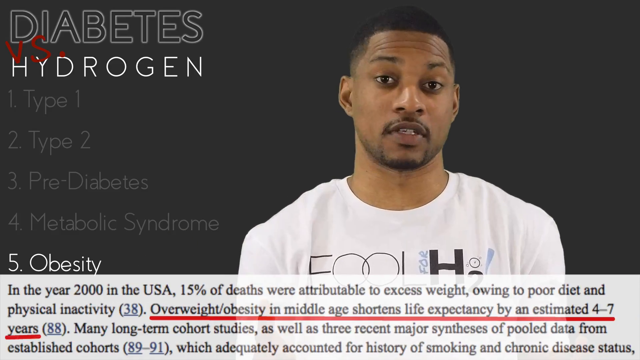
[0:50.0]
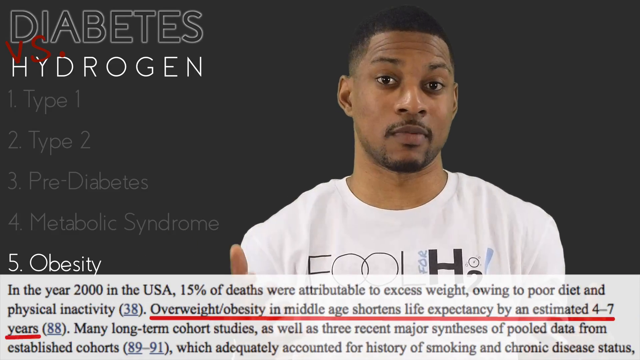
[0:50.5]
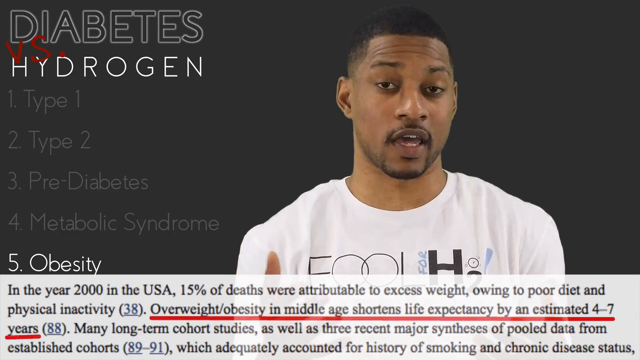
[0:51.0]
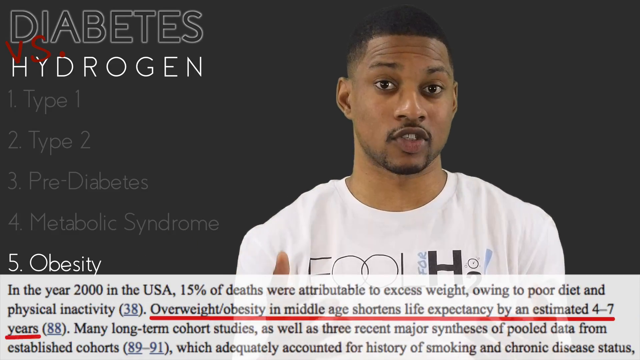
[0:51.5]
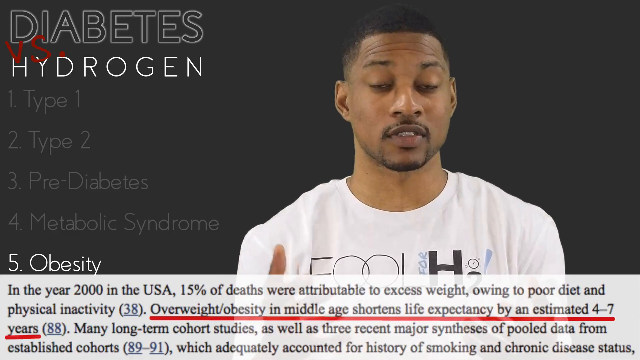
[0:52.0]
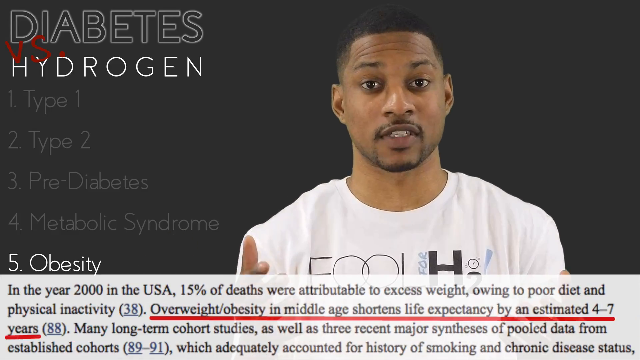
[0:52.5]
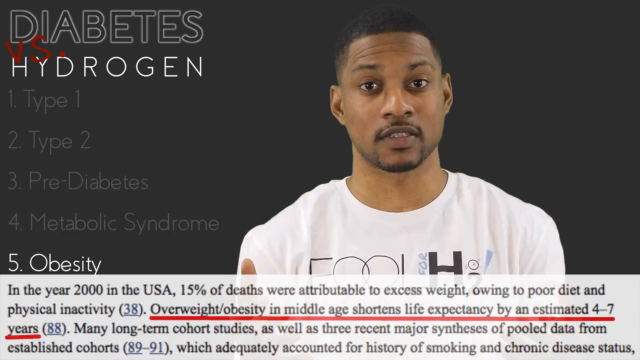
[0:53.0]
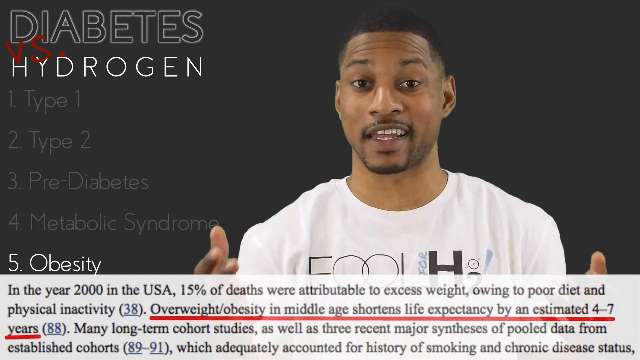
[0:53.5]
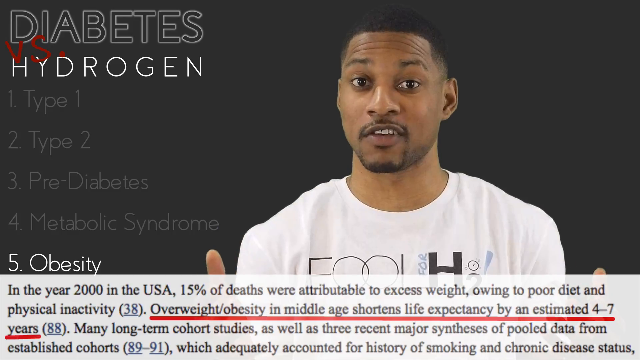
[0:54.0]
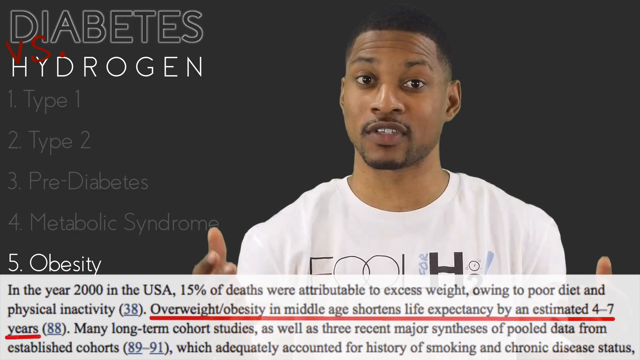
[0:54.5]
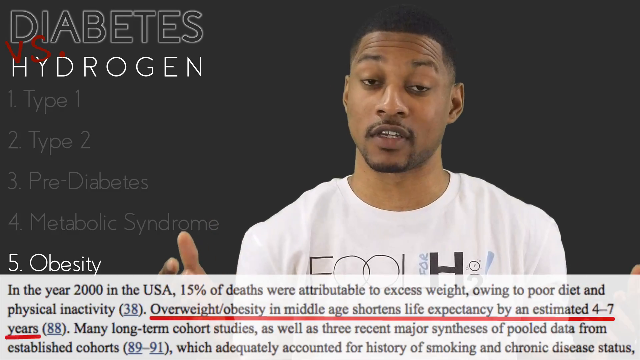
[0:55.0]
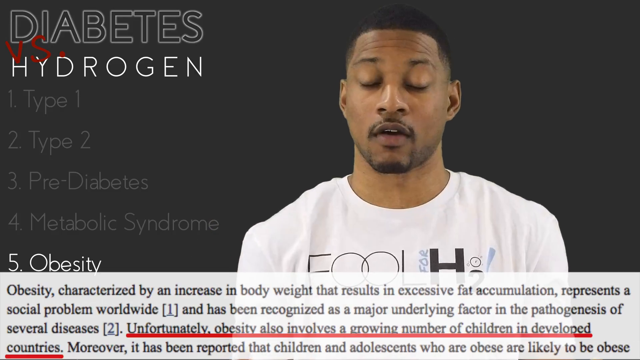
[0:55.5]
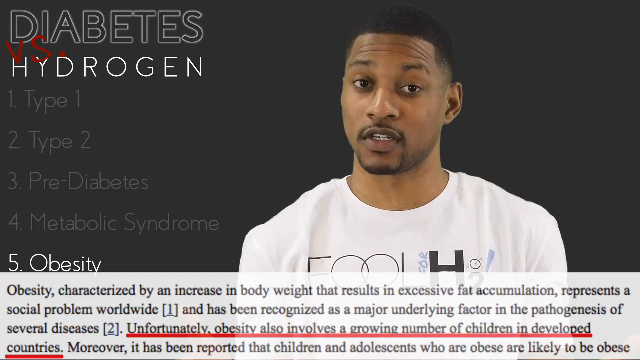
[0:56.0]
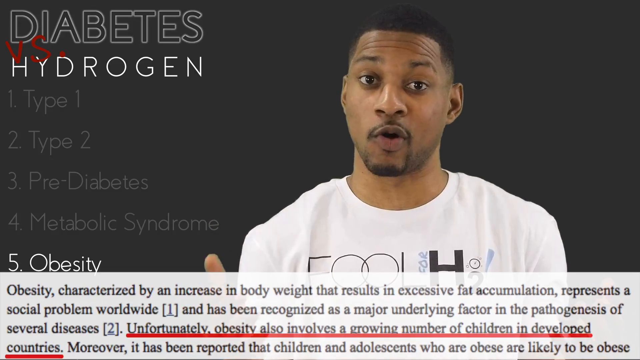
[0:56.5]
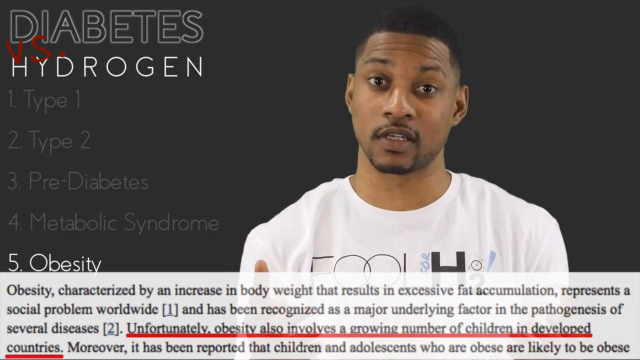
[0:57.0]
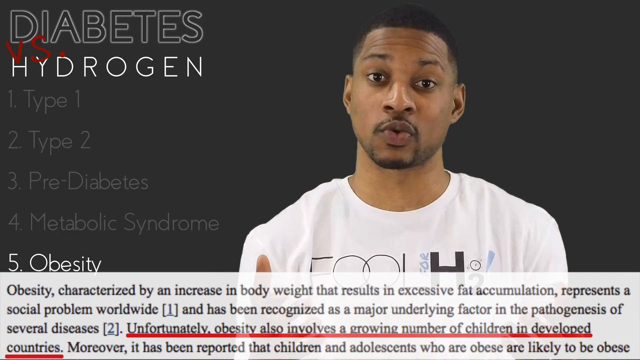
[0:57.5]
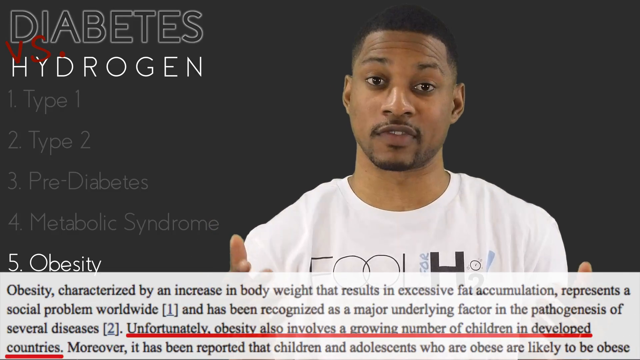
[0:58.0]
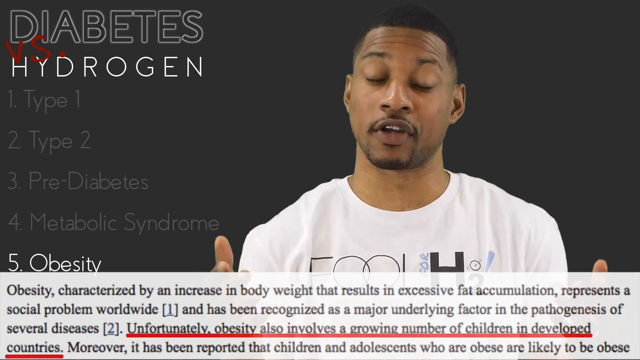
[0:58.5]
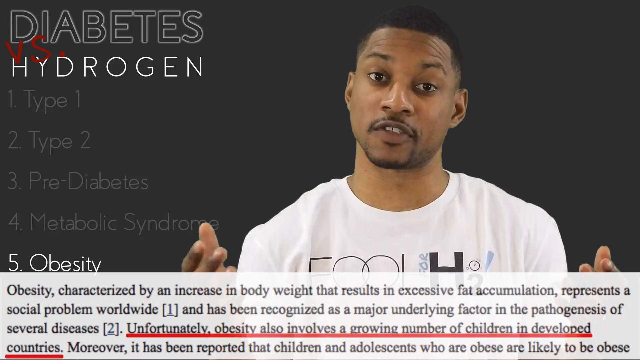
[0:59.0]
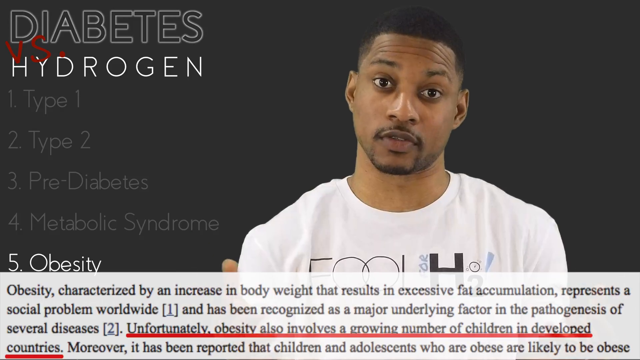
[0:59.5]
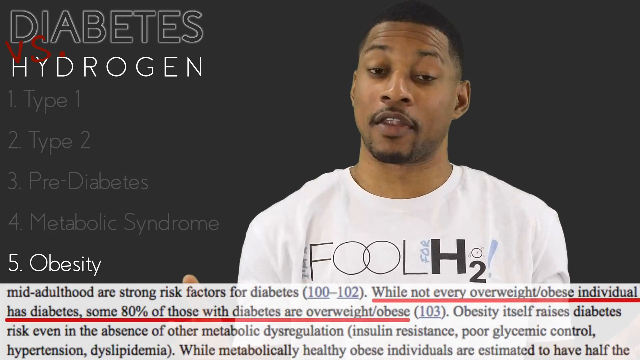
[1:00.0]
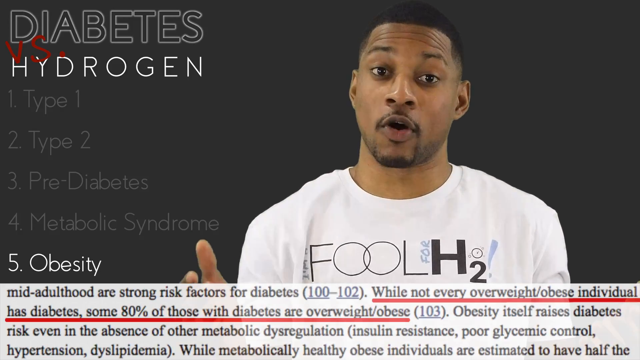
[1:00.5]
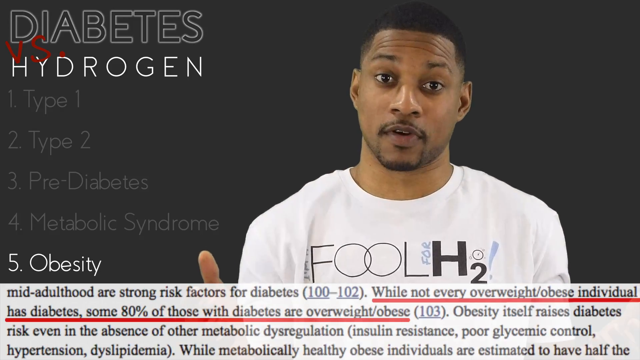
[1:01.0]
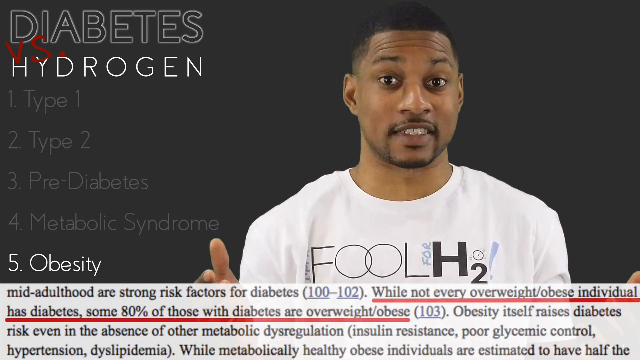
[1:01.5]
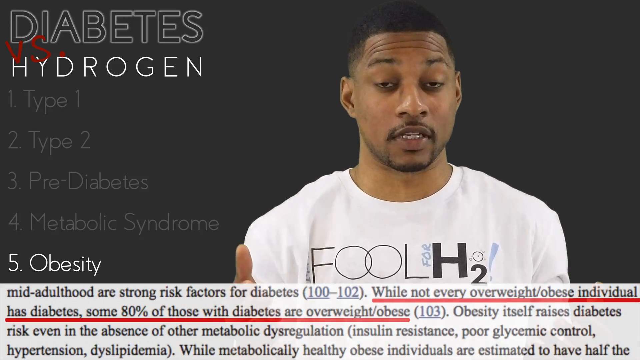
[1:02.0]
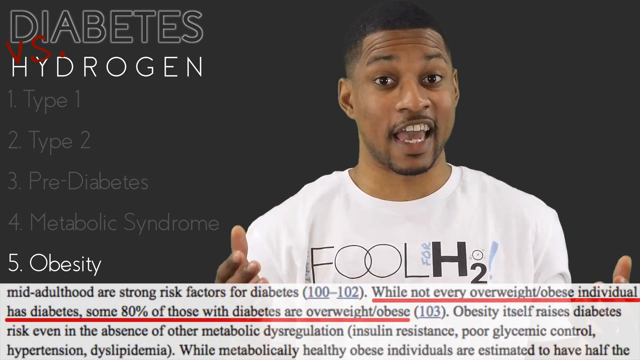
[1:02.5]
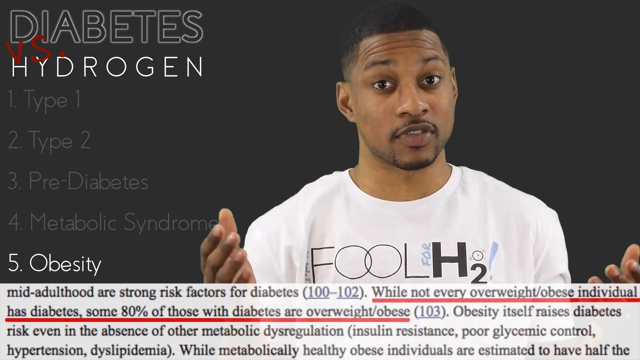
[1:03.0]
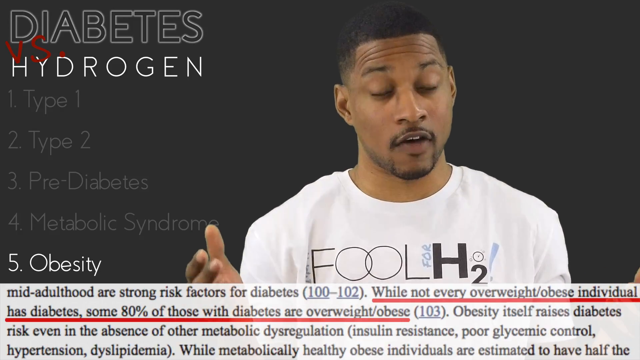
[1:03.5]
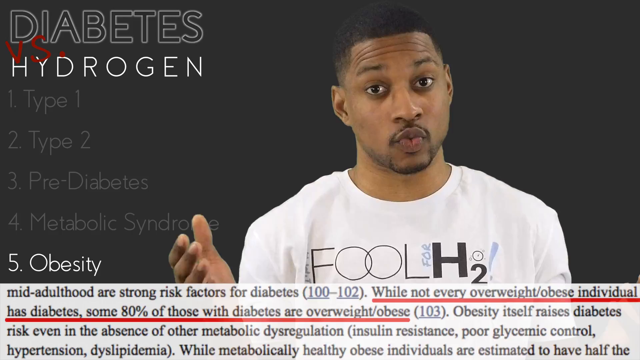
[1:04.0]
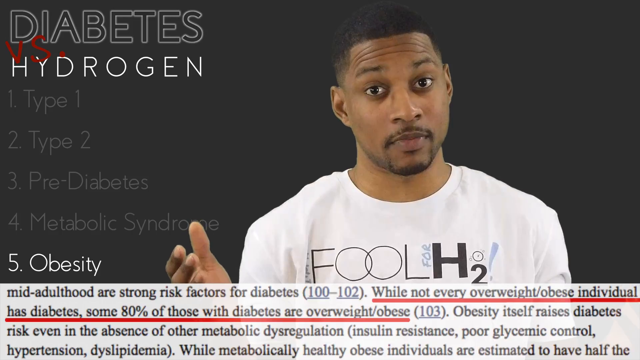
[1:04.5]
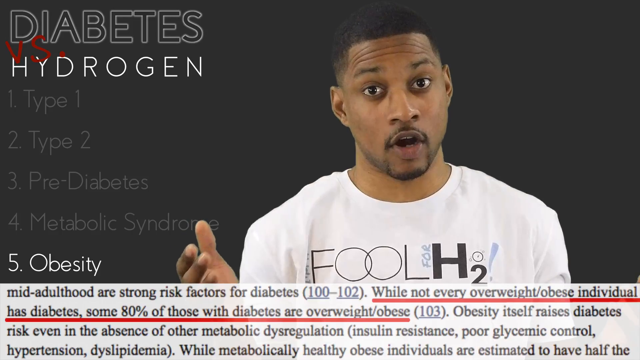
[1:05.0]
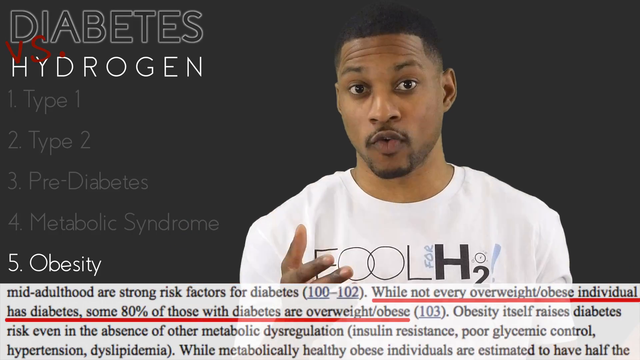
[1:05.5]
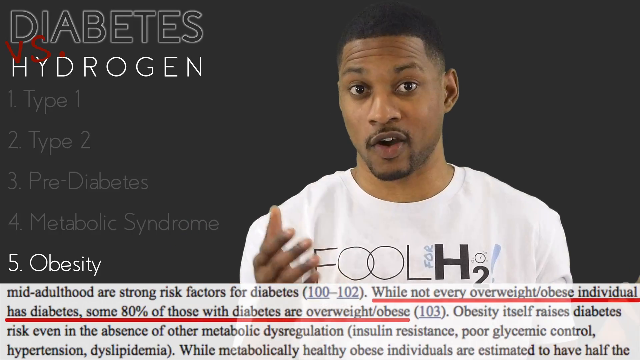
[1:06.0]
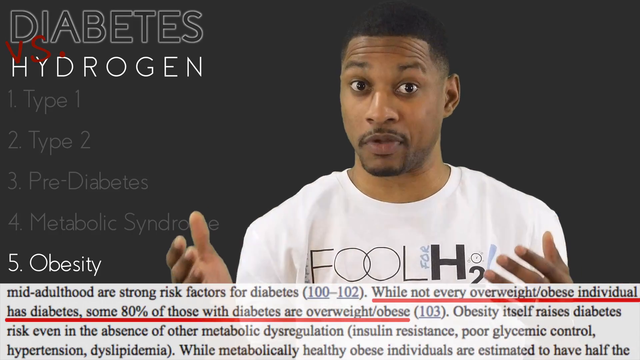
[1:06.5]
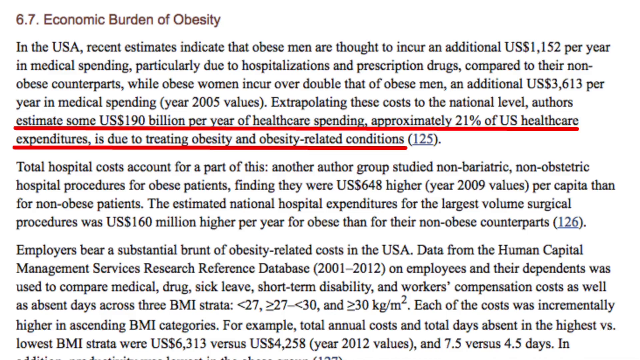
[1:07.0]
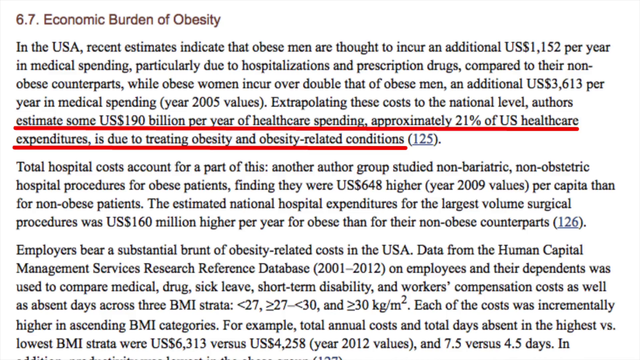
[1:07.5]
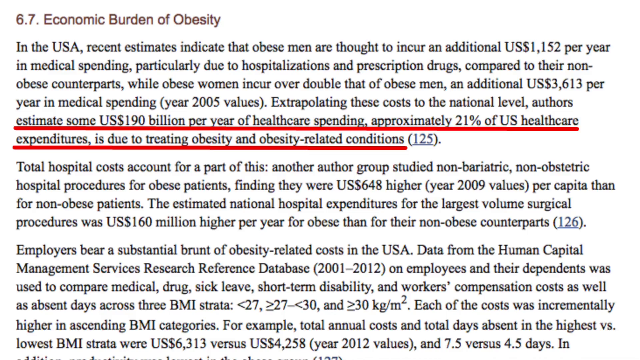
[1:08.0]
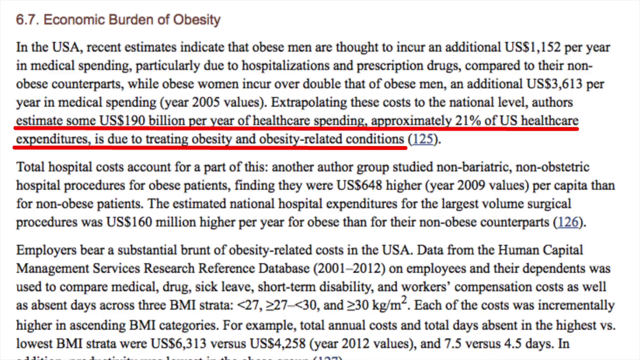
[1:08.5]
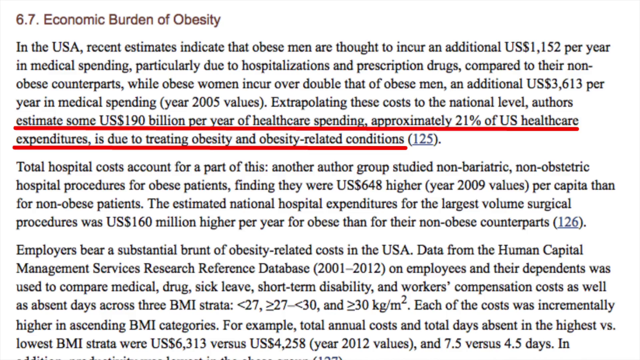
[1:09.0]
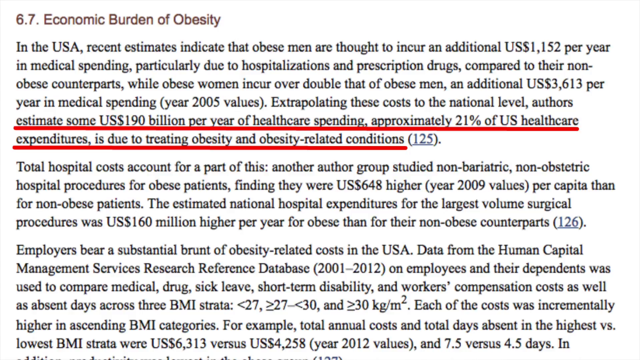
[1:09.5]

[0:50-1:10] Obesity is defined simply as excess body weight for height, a definition that leaves out a complex phenotype primarily associated with excess adiposity. Obesity is presented as greatly increasing the risk of chronic diseases and morbidity, namely disability, depression, type 2 diabetes and cardiovascular diseases.